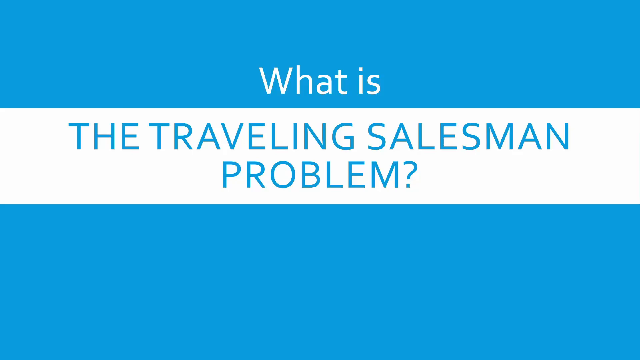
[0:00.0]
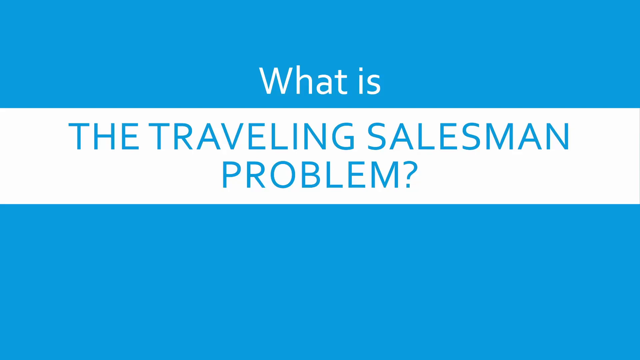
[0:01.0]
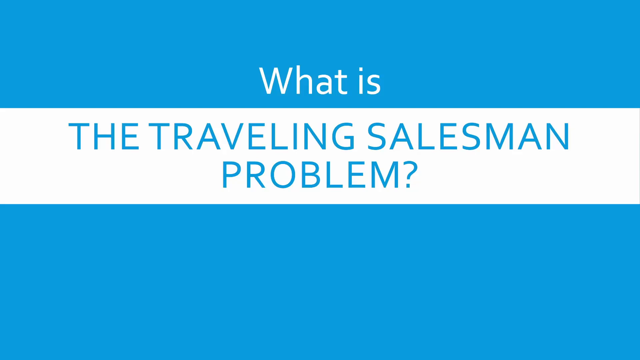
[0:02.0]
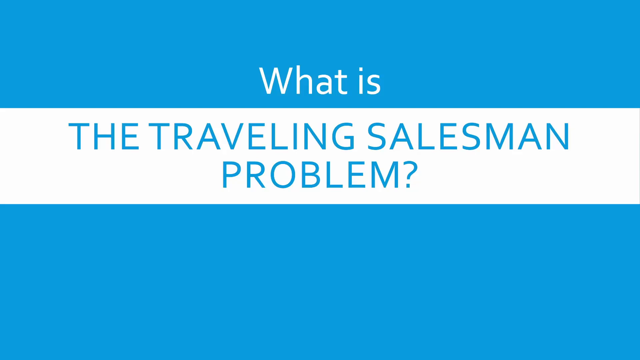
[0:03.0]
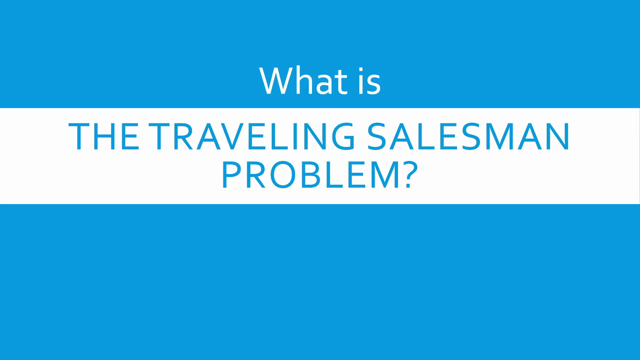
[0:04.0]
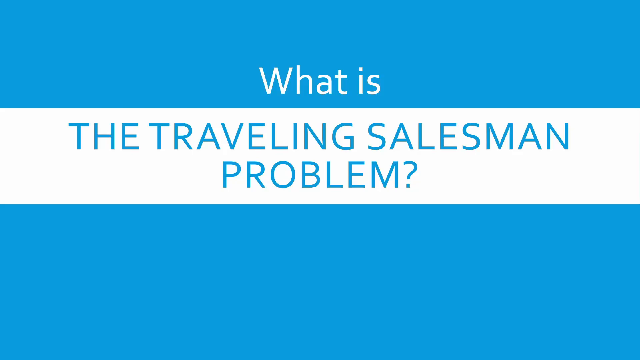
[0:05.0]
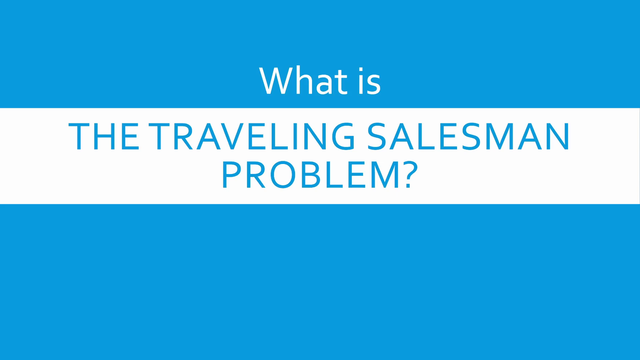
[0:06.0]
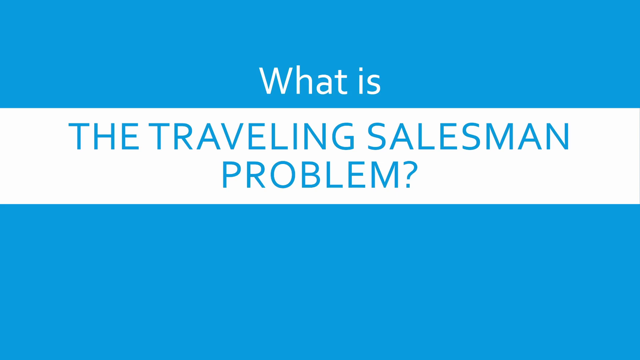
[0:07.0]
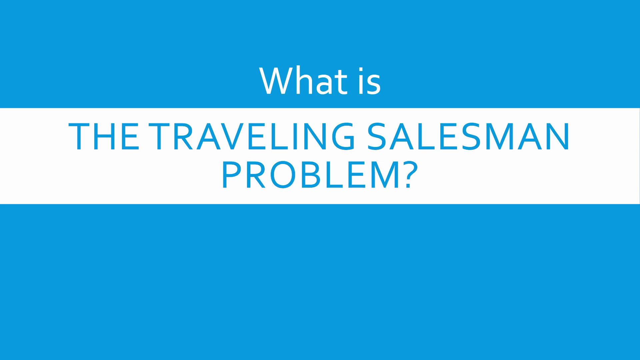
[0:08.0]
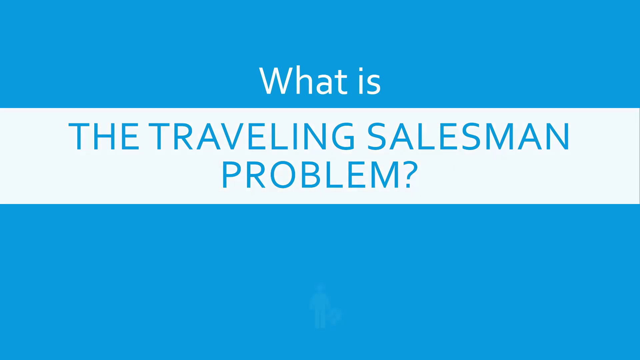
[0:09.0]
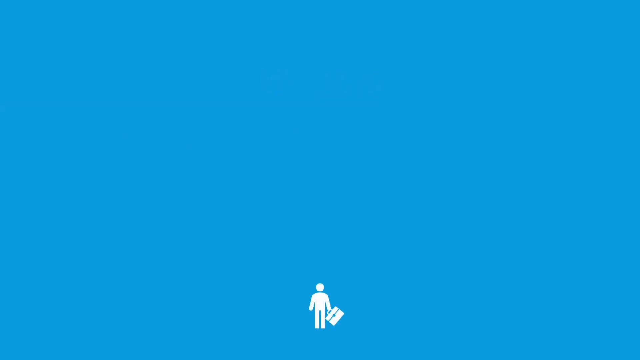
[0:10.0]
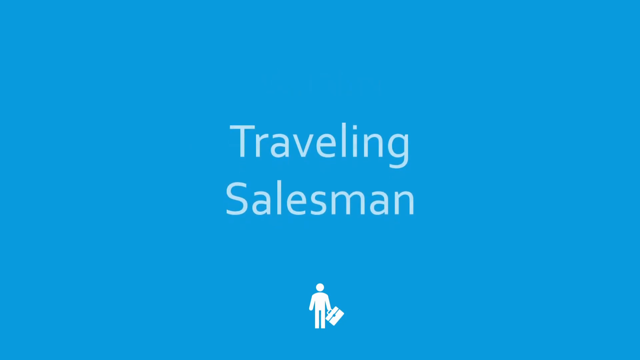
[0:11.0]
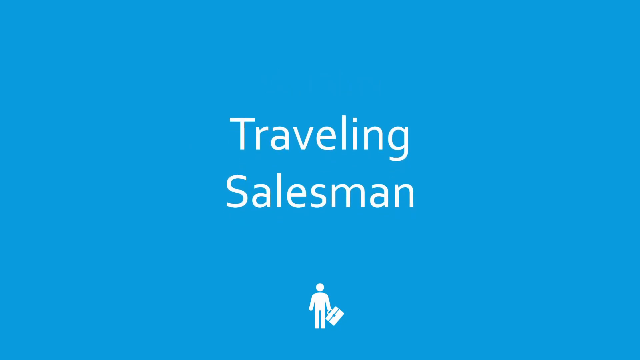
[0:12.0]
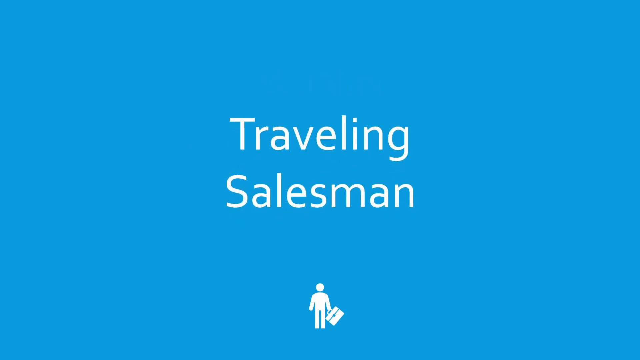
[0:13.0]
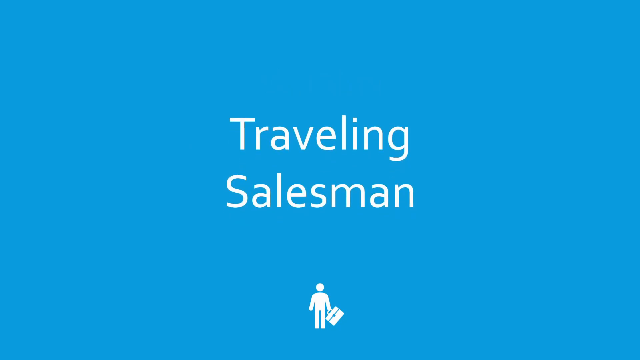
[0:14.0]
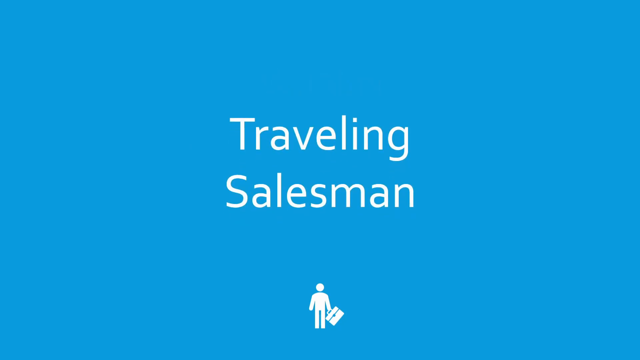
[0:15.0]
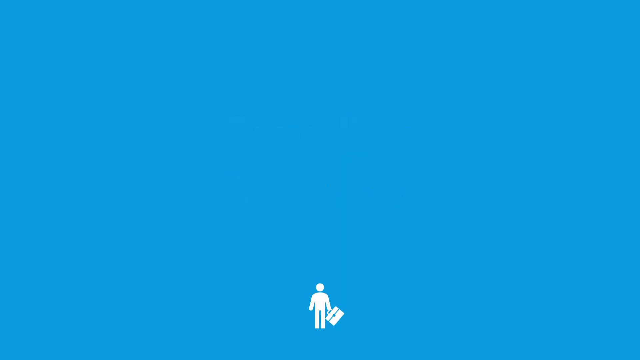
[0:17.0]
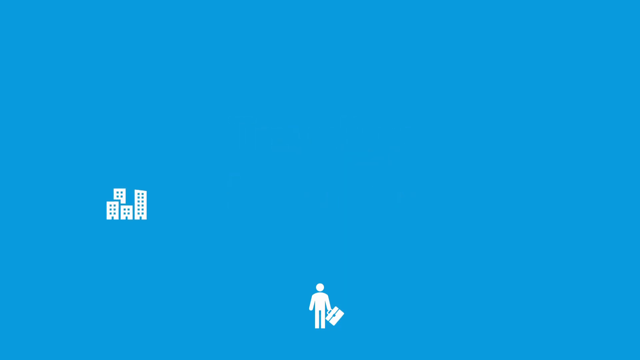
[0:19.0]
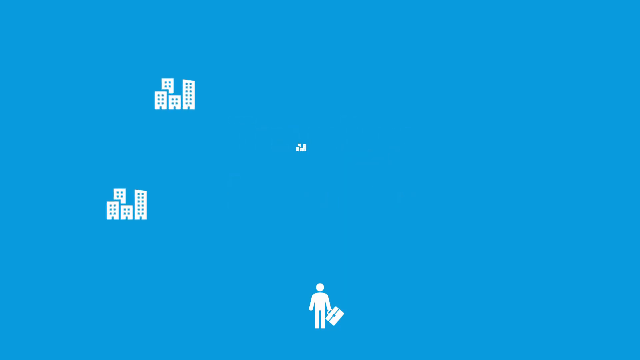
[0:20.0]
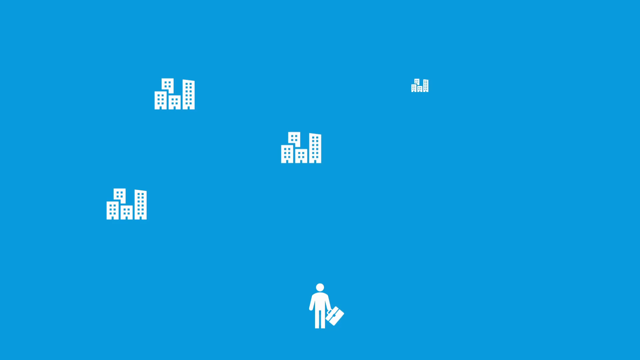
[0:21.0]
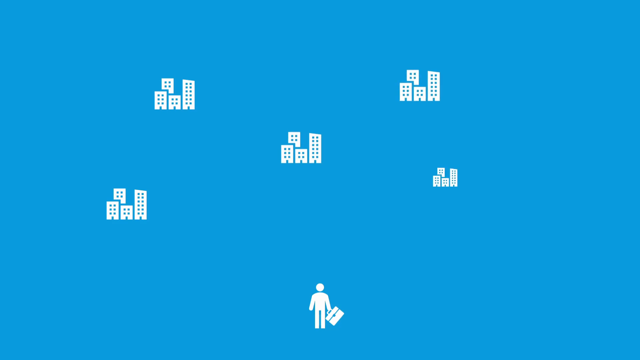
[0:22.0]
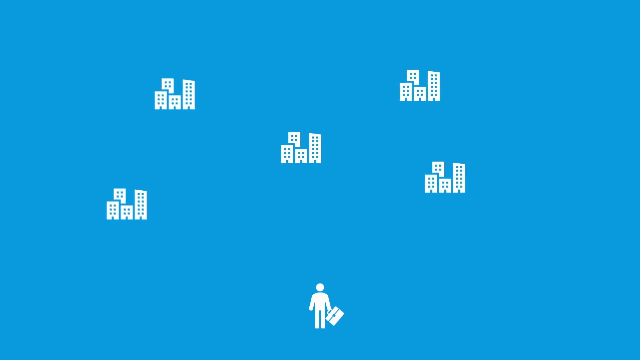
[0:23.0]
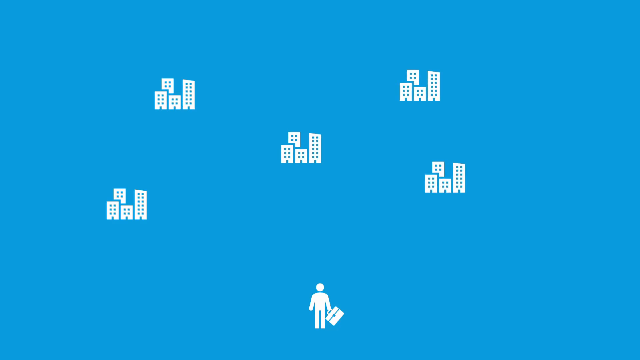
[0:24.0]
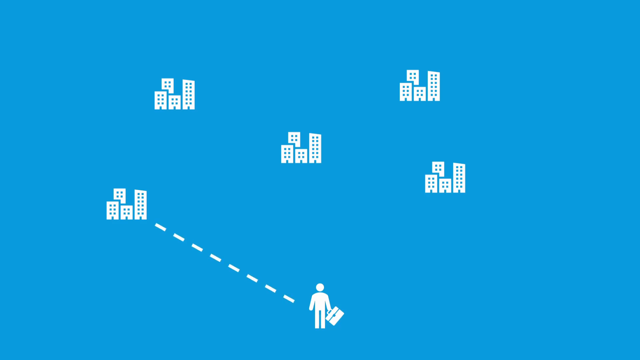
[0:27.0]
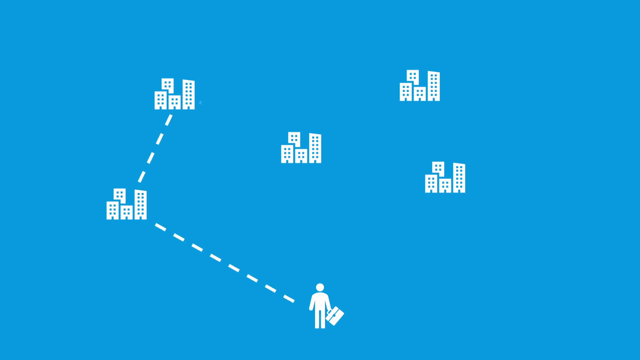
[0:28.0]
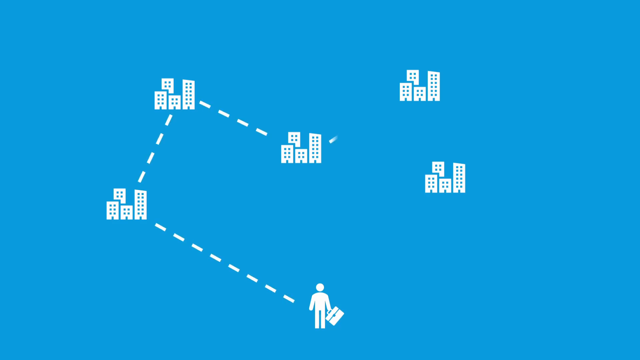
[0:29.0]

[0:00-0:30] The opening screen reads "what is the traveling salesman problem." The words "traveling salesman problem" appear in blue letters on a white area in the middle of the screen, while "what is" appears in white letters on the blue top border; the bottom part is also blue. Next, an icon of a man appears, like the figure on a men's bathroom sign, carrying a briefcase, with the text "traveling salesman." Five little white cities appear on the blue background, kind of toward the bottom, with a dashed line apparently showing where this person might go: it first goes up diagonally to the first city, then up to the next, then up to the next, then down to the last one.